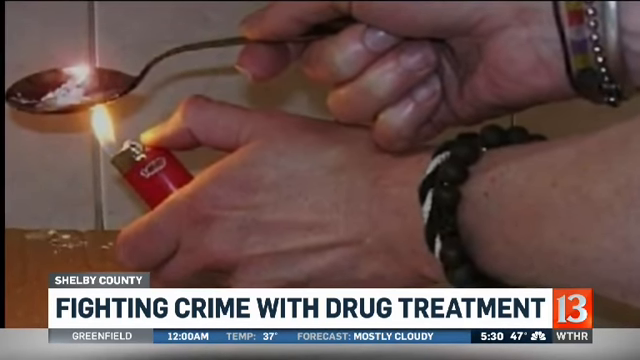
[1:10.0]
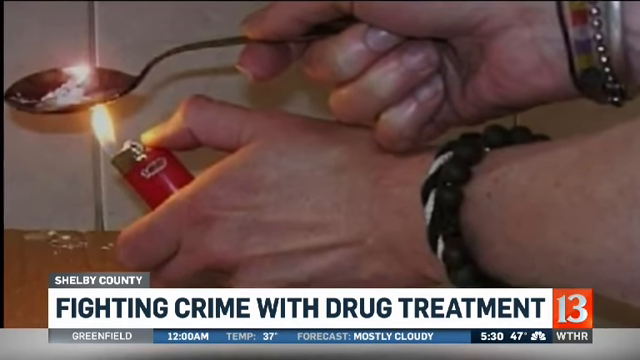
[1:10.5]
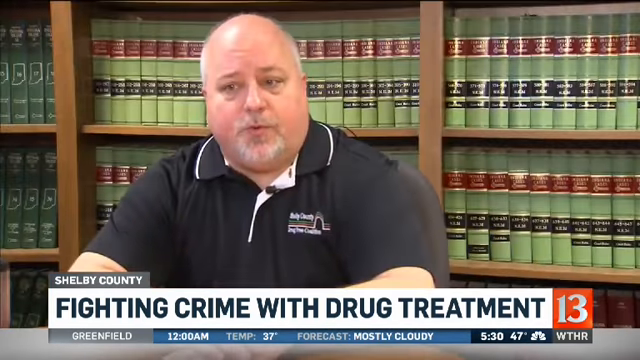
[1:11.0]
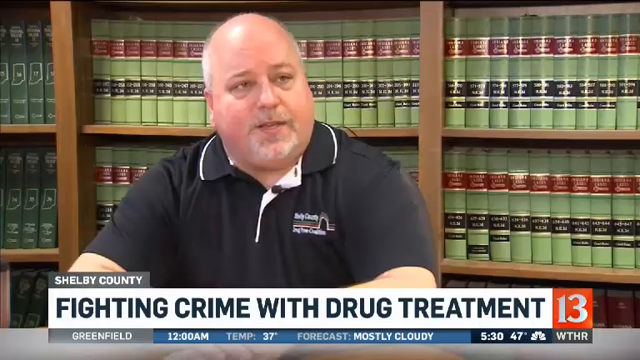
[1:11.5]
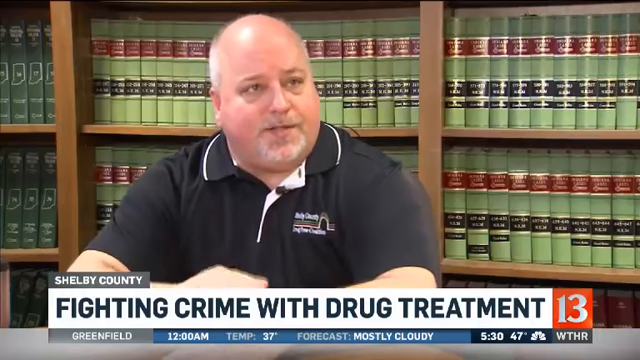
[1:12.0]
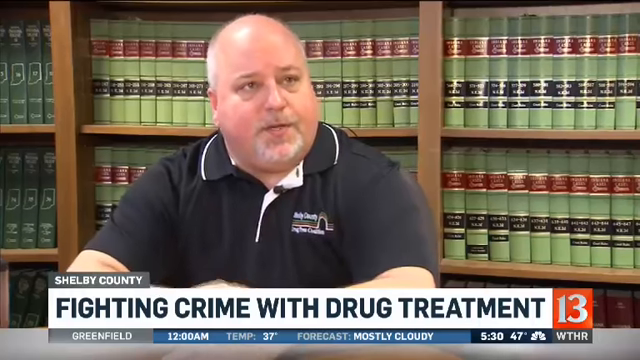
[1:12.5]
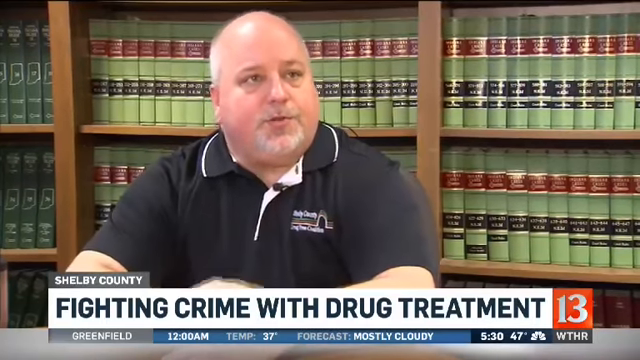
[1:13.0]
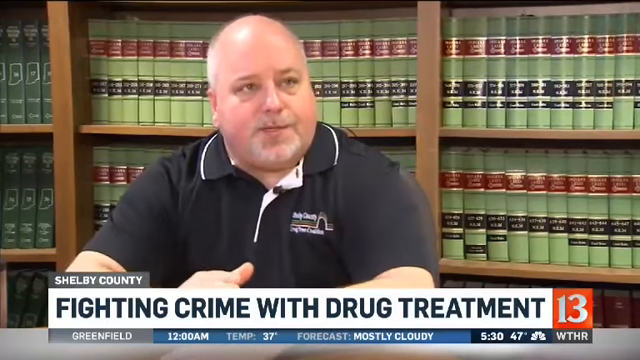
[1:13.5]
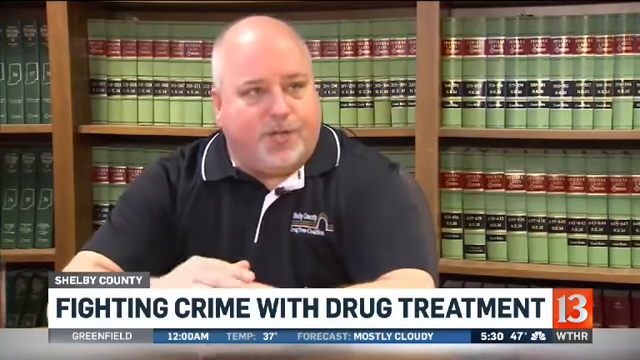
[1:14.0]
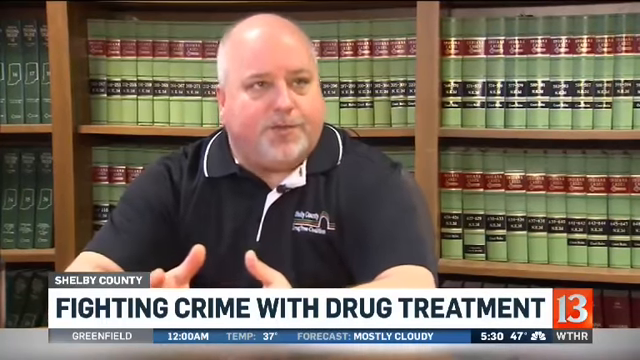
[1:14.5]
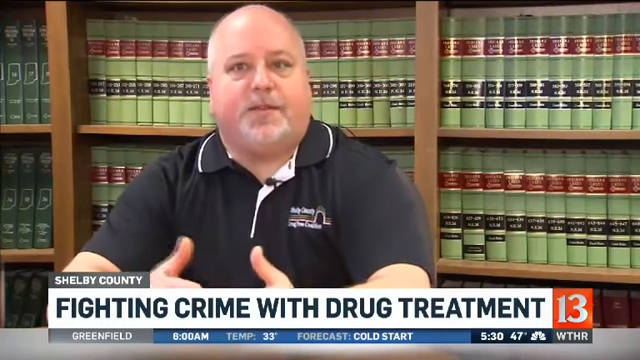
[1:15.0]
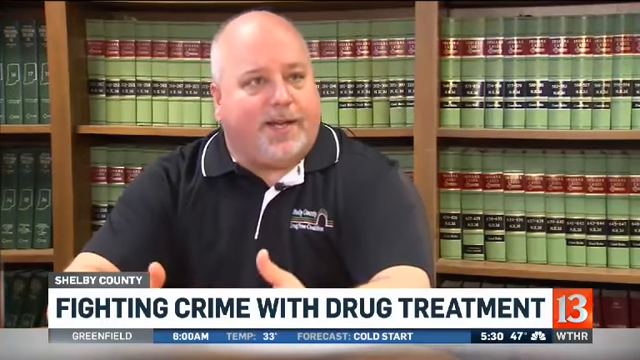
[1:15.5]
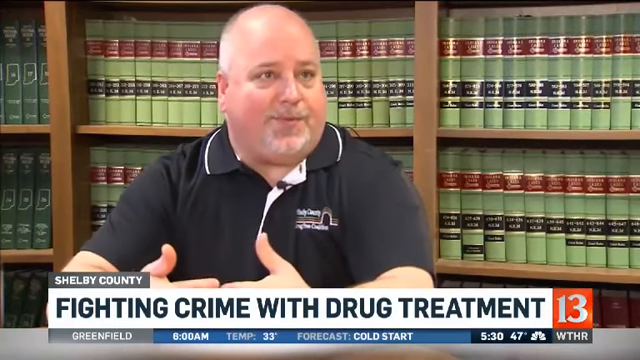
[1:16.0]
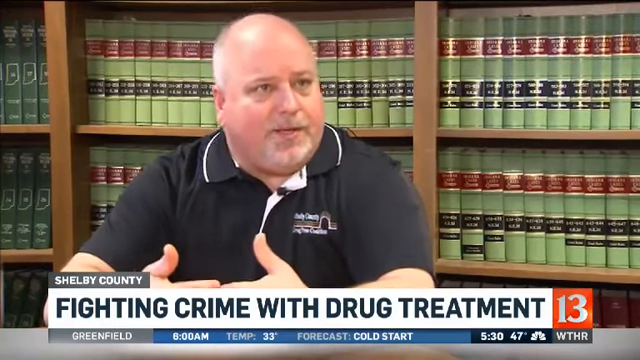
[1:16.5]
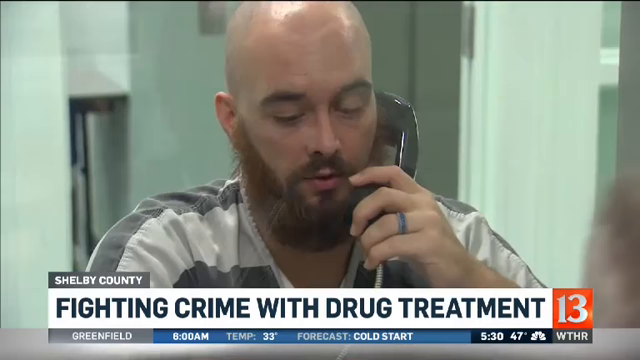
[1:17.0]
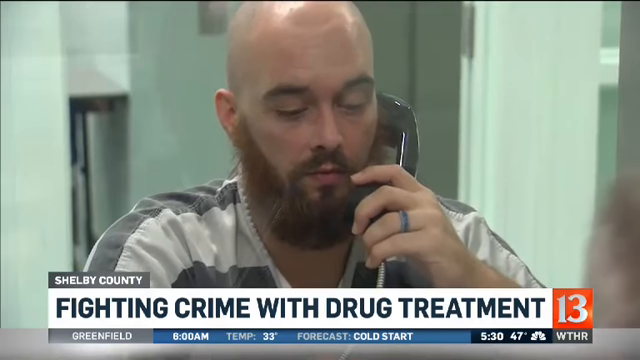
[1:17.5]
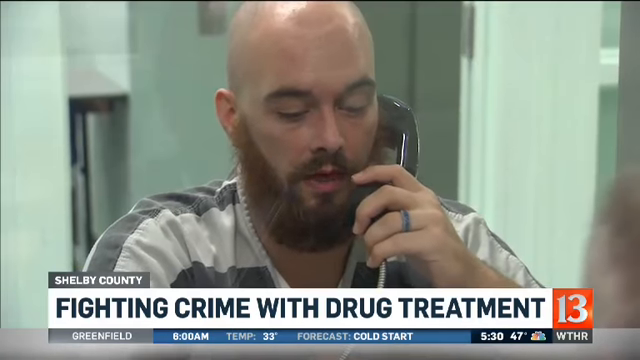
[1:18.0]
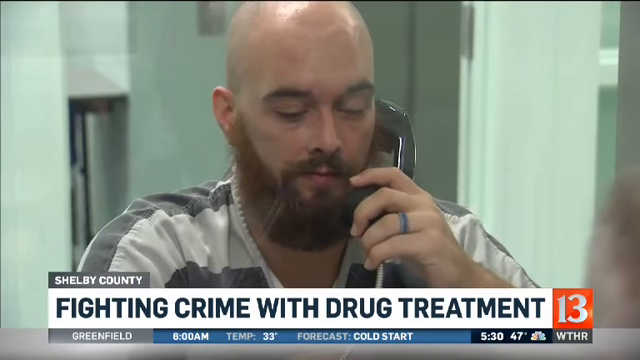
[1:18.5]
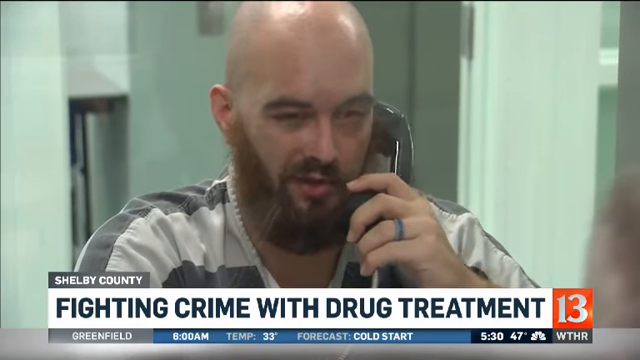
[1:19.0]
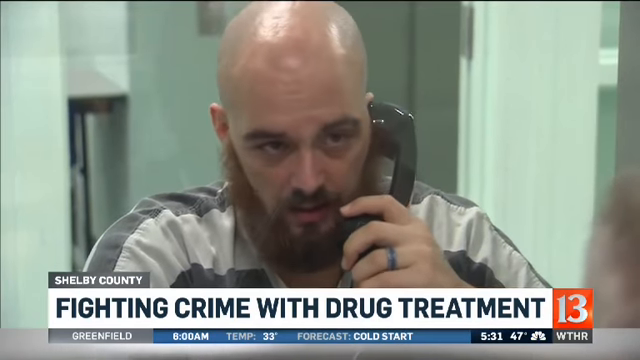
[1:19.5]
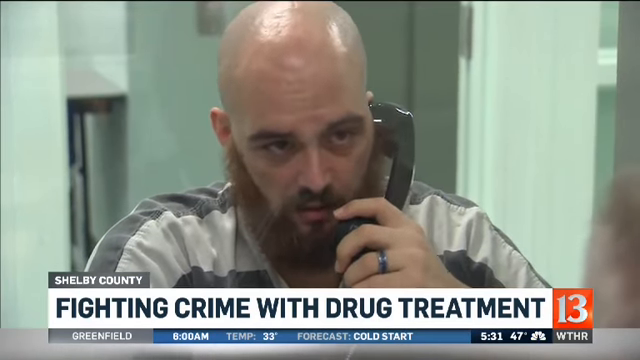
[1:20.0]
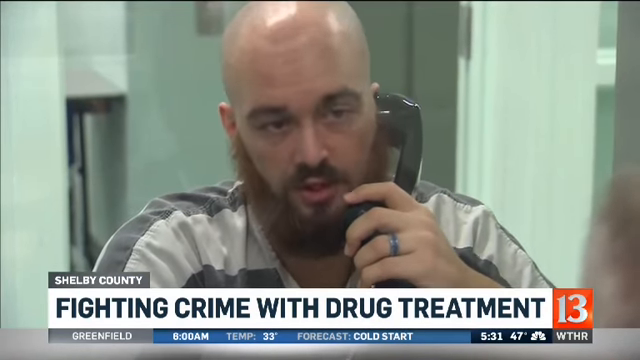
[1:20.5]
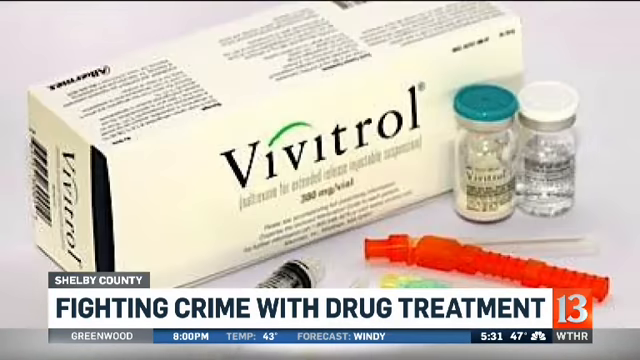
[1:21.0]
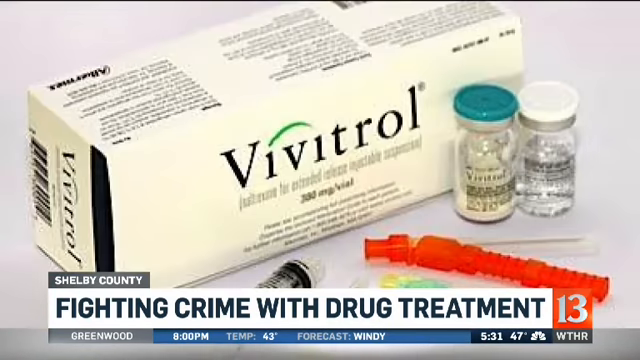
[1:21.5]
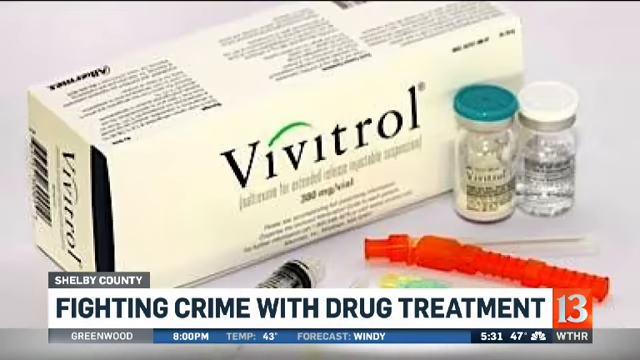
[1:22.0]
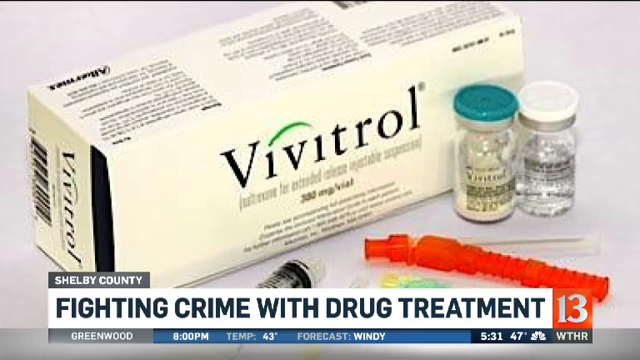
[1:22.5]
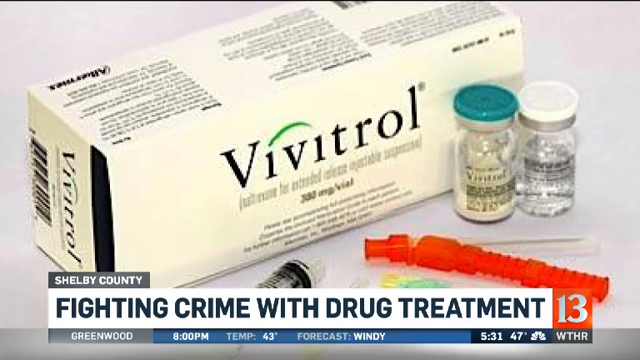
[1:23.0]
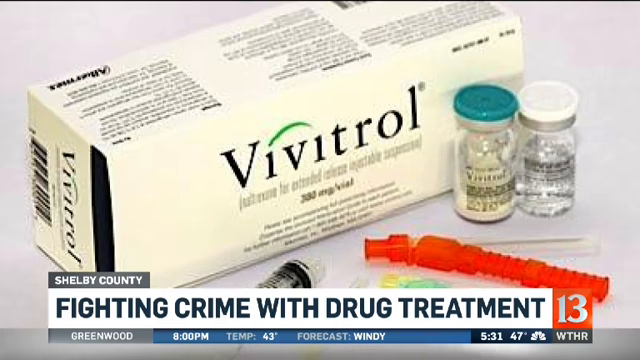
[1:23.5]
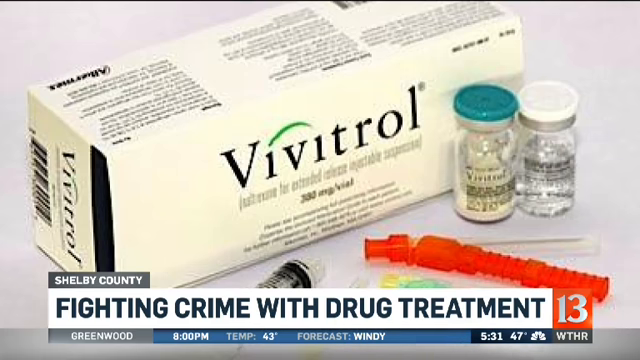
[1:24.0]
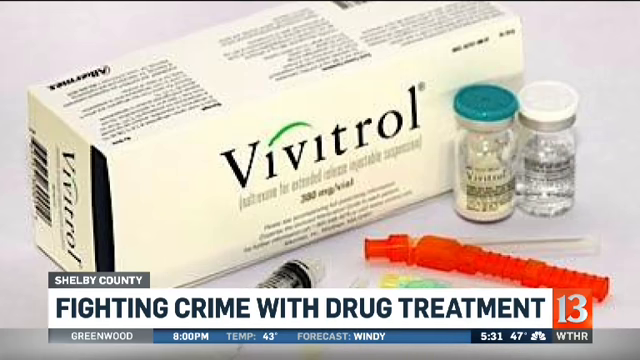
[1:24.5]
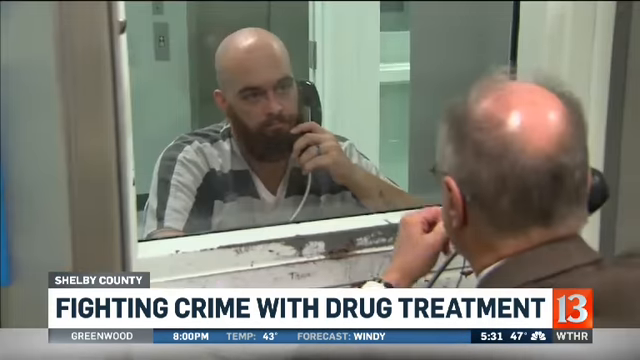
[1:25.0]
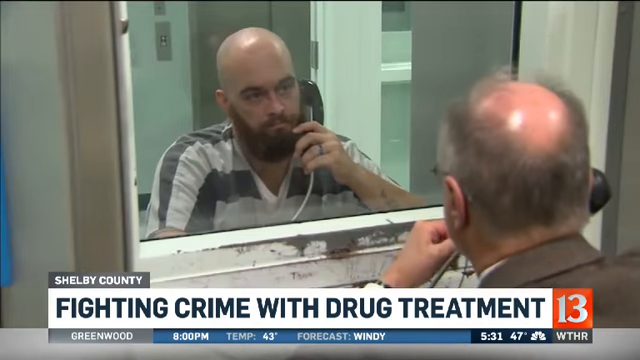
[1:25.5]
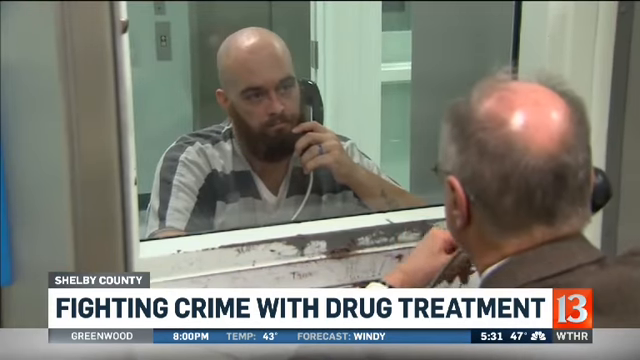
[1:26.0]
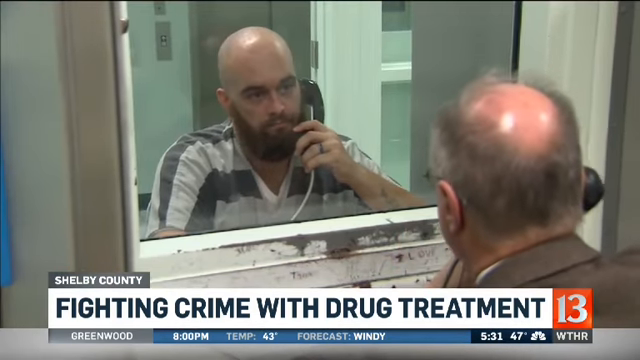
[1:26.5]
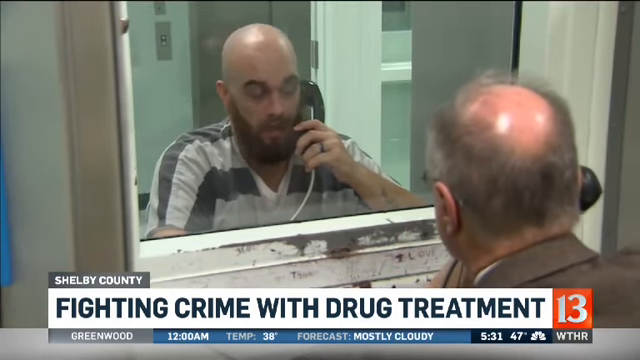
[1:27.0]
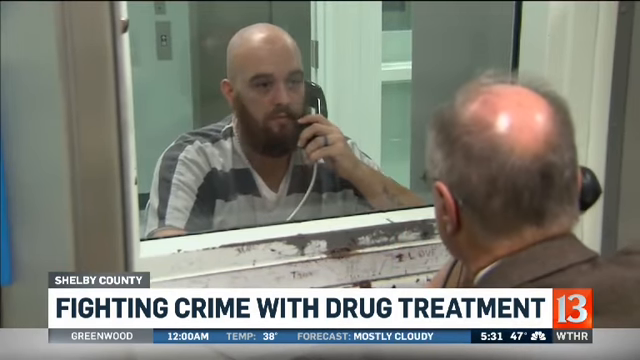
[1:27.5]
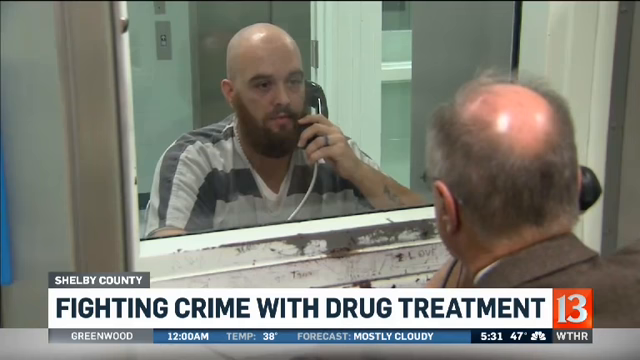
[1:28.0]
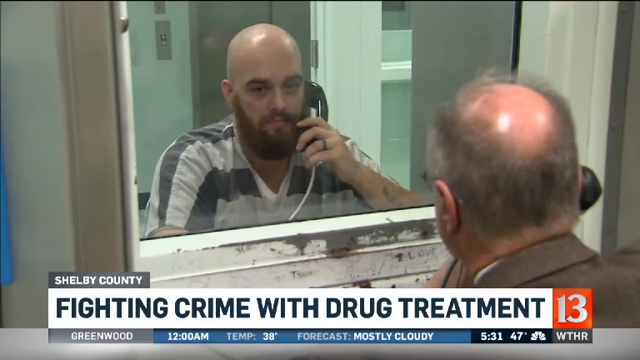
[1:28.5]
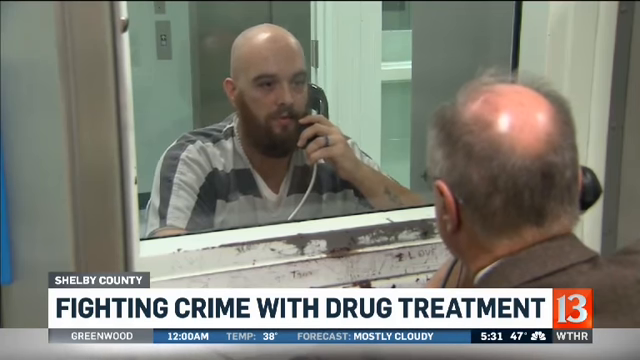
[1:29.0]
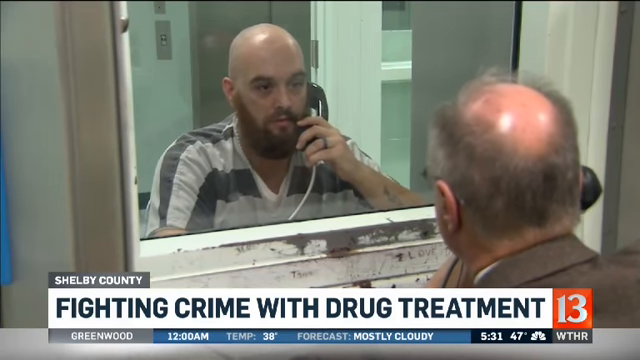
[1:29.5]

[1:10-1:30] The hands of an individual wearing bracelets on both hands are shown. On the left hand are a bracelet with pearls and a string bracelet; on the right hand are more colorful bracelets, including a silver one, a ring bracelet and a string bracelet. On the left side of the picture is a spoon with a substance on it, and the person lights a big red gun lighter. The video then returns to the interview with the man in the black shirt as he speaks. It cuts back to the prisoner on a call, being interviewed by the same man who interviewed the man in the library. A close-up shot shows a picture of the Bio-patrol medication, followed by a close-up of the prisoner and the man continuing the interview.